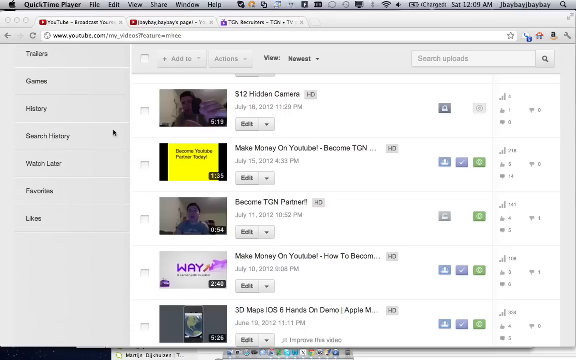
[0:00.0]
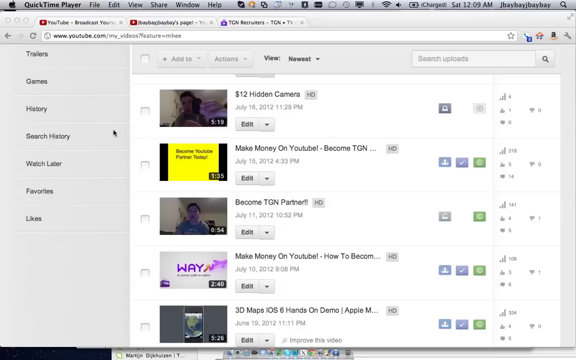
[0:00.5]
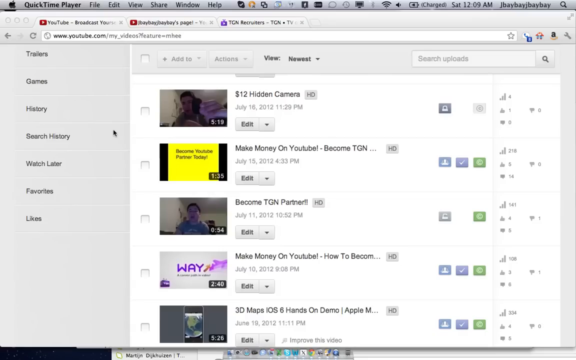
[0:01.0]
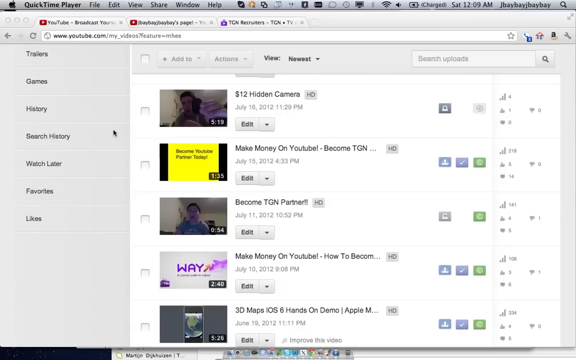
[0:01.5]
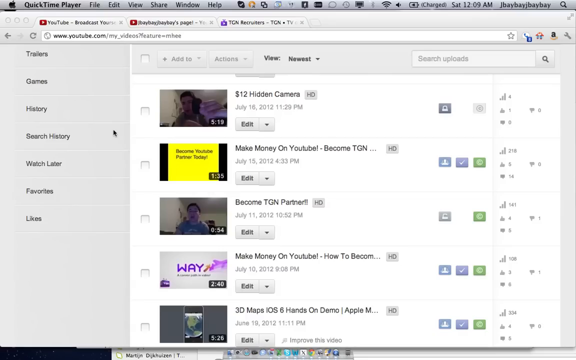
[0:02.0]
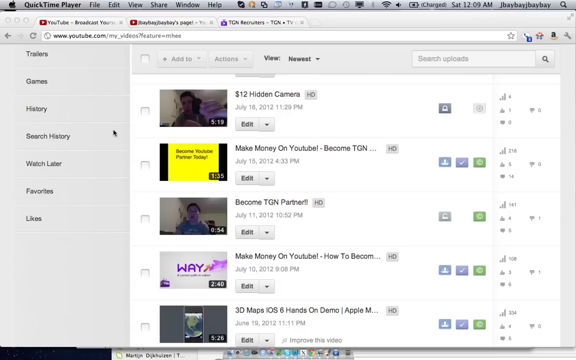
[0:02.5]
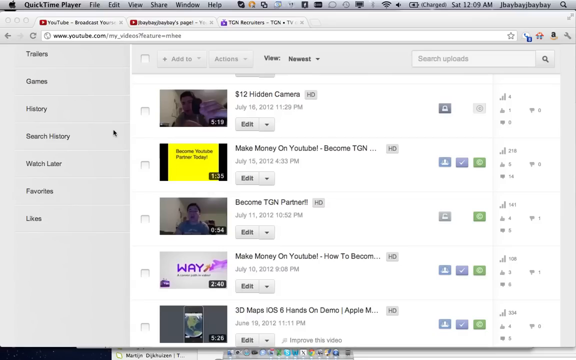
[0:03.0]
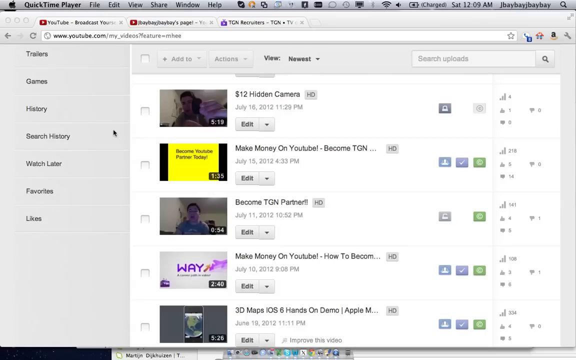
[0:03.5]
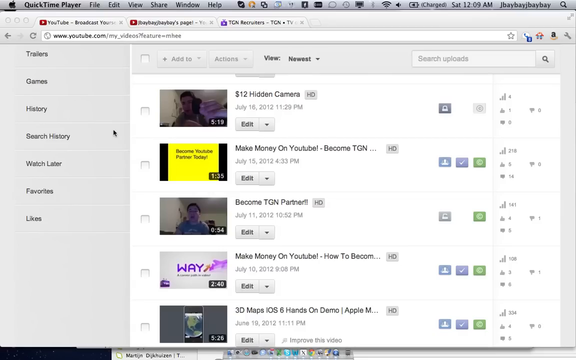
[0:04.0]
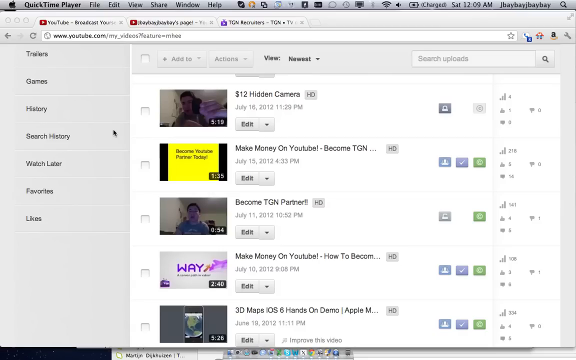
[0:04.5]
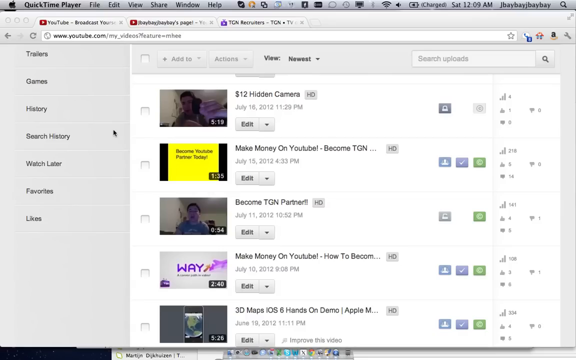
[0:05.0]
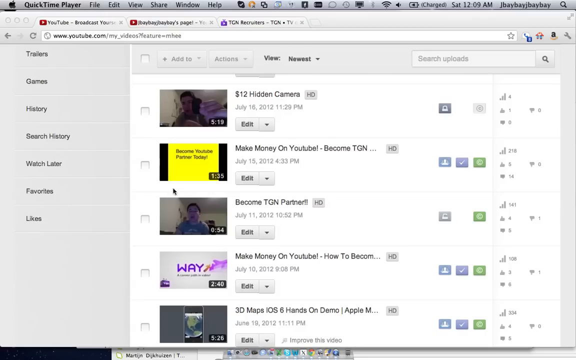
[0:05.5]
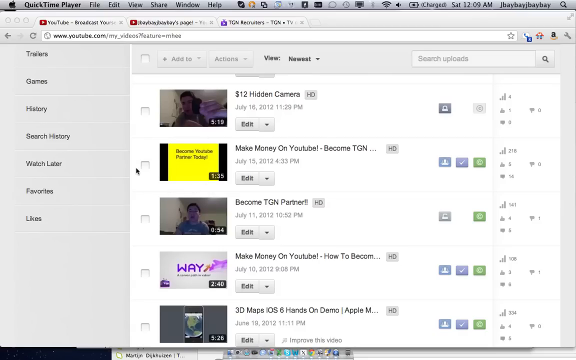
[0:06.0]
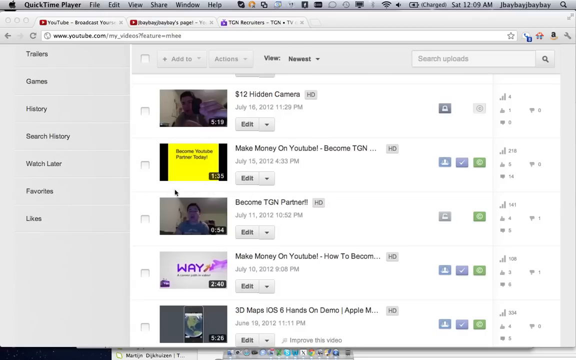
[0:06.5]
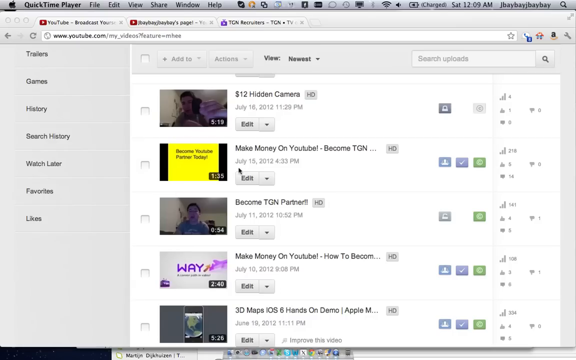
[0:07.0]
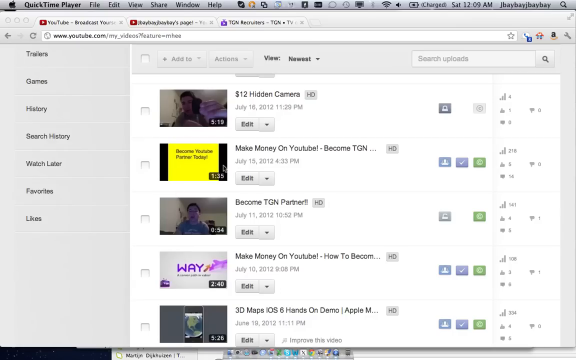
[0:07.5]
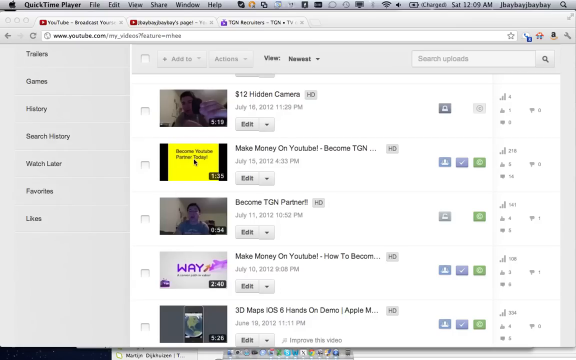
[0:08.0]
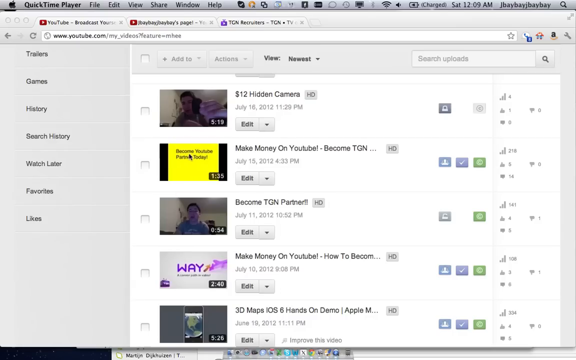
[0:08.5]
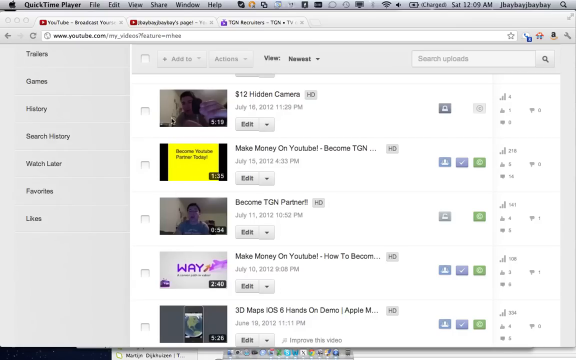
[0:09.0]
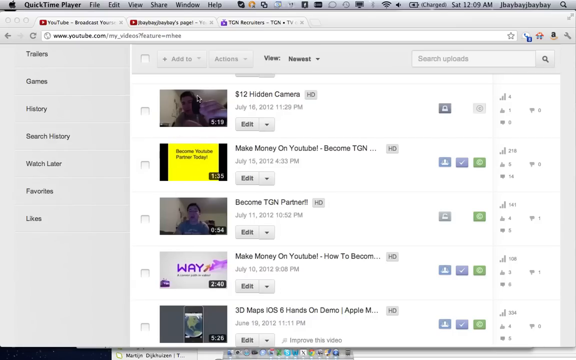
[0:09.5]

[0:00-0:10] QuickTime Player is open along with a website, youtube.com, on a "My Videos" feature page. A series of videos is listed, including "$12 hidden camera", "make money on YouTube", "become a TGN partner" and "make money on YouTube", with sidebar items reading "trailers", "games", "history", "search history", "watch later", "favorites" and "likes". The cursor selects "make money on YouTube $12 hidden camera". QuickTime Player may be used for some sort of import. Five videos are on the screen: one shows a person holding something indistinguishable close to the screen, one has a yellow title card reading "become YouTube partner today", another shows a person wearing a blue T-shirt, and one is an "I06 hands-on demo". The File and Edit menus are selected, and there are tabs open.